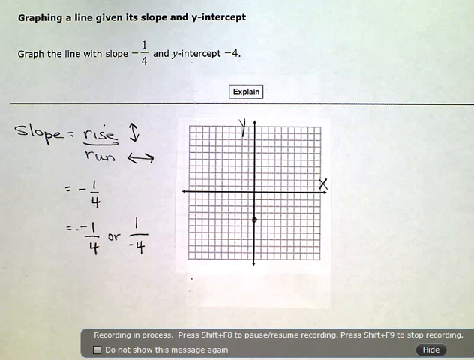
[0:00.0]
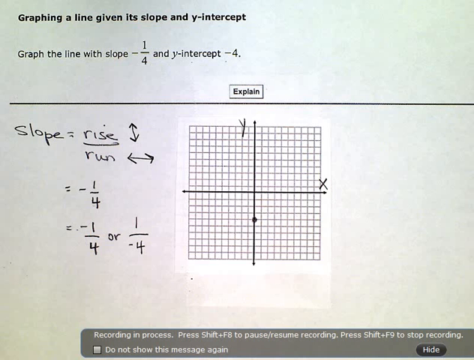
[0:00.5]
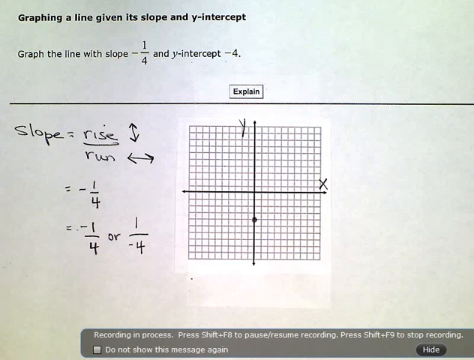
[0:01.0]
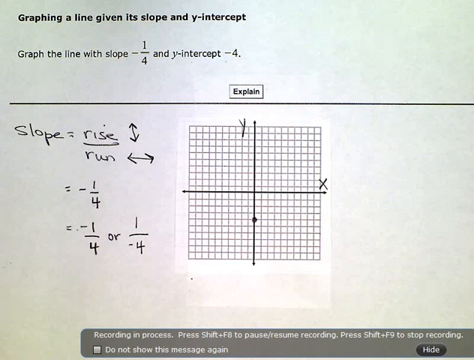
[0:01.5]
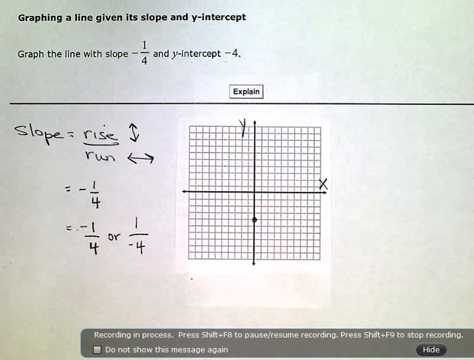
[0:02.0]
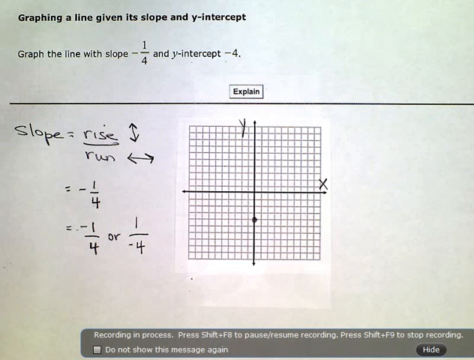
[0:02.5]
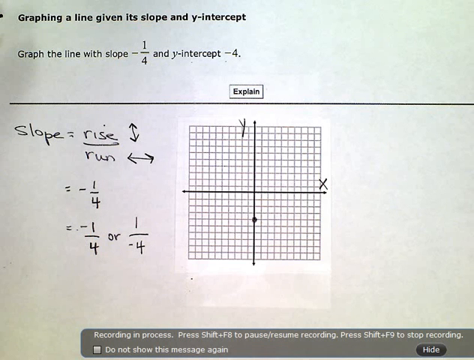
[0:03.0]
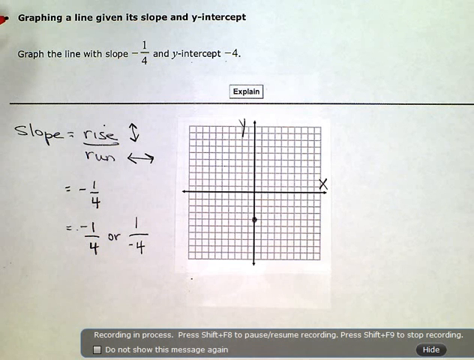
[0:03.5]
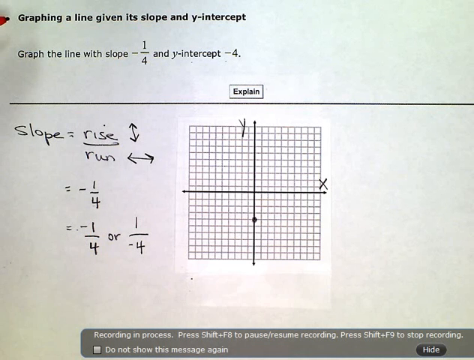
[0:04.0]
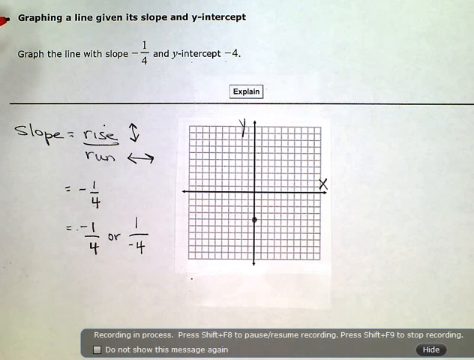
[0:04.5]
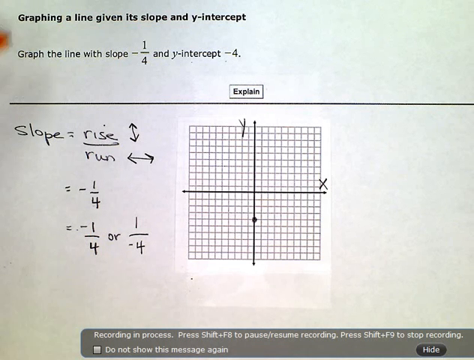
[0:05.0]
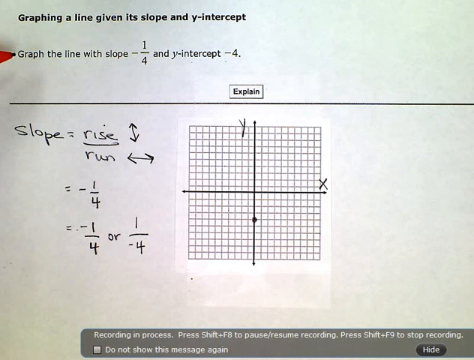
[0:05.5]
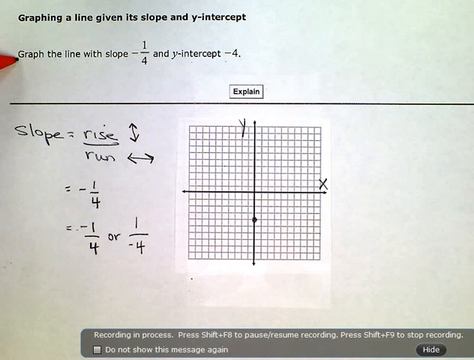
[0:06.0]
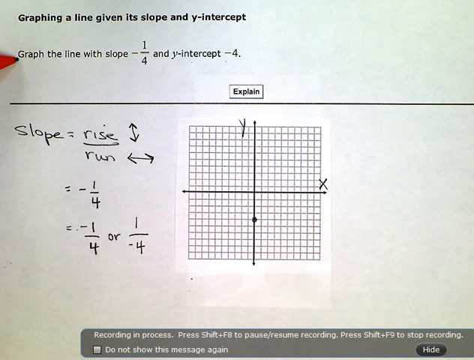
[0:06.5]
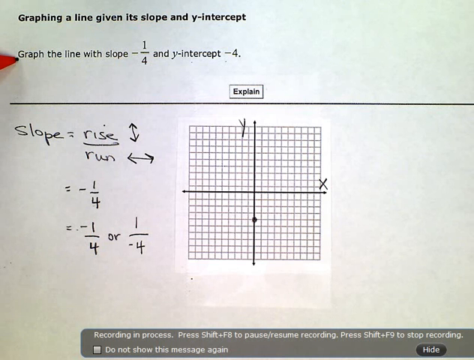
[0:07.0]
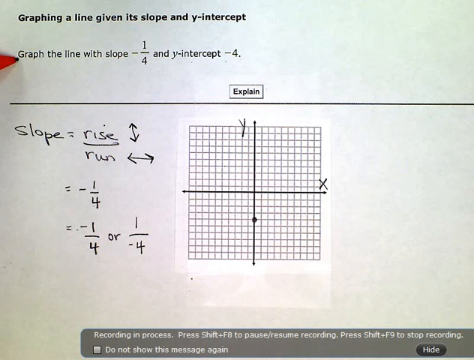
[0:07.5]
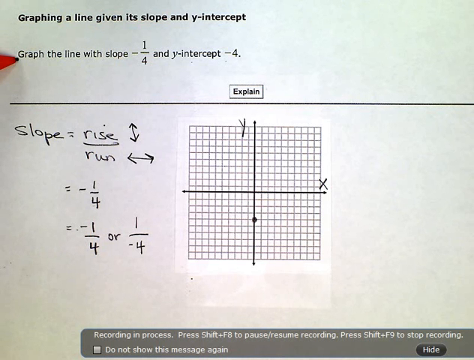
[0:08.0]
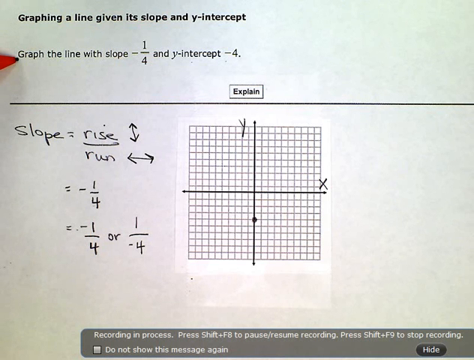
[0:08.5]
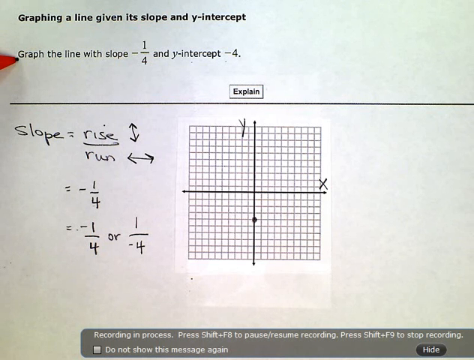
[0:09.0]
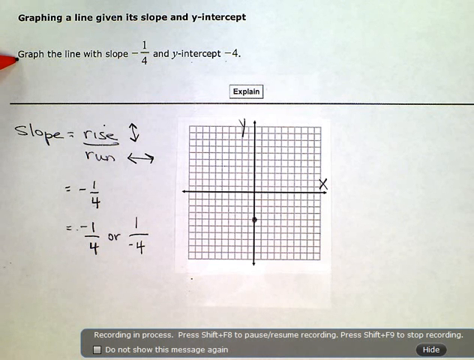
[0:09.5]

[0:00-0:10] What looks like an educational math display covers graphing a line given its slope and y-intercept. In the top left of the screen, someone points with what looks like a pen or marker, apparently going over the question. Below, the slope and the y-intercept are shown, along with a formula that seems to be the solution, and someone appears to be explaining the solution to the problem. At the bottom of the screen there is what looks like a recording error symbol. The person moves down the piece of paper, showing fractions and going over them, but stays more toward the top of the page.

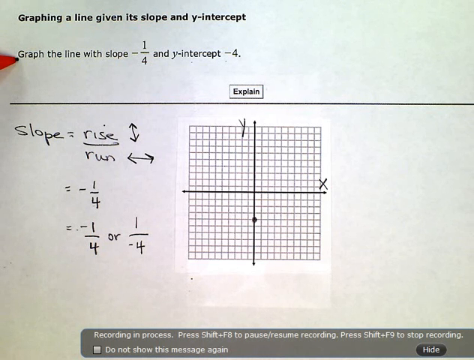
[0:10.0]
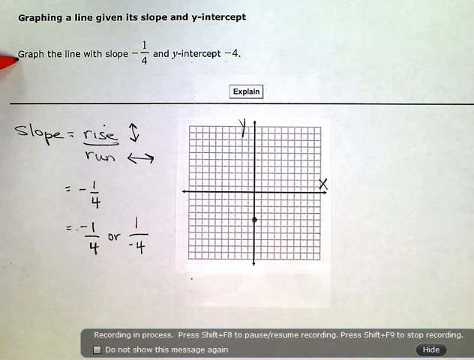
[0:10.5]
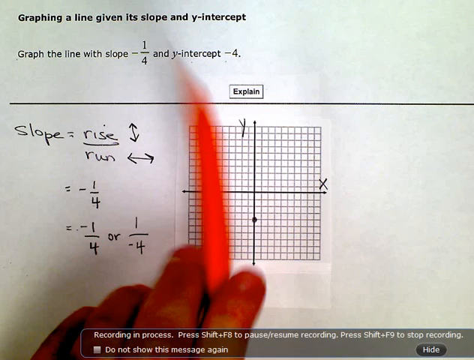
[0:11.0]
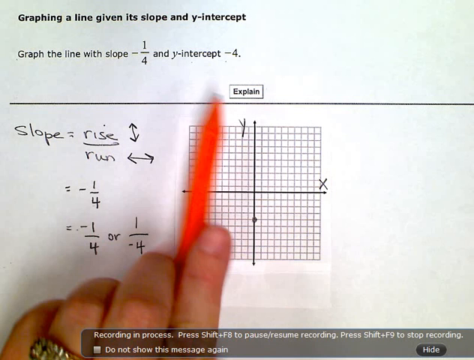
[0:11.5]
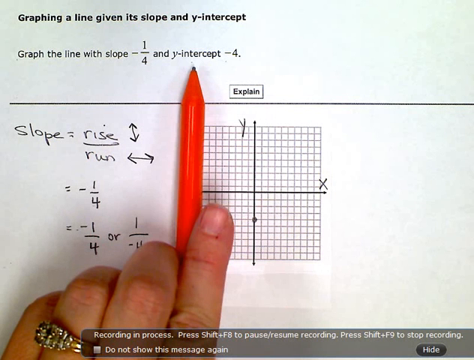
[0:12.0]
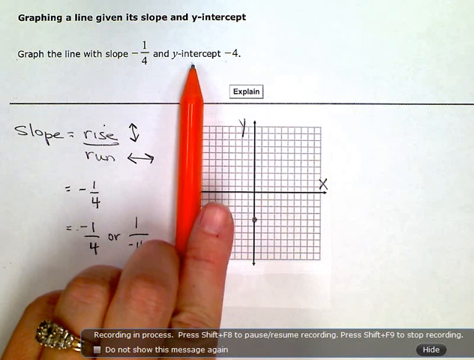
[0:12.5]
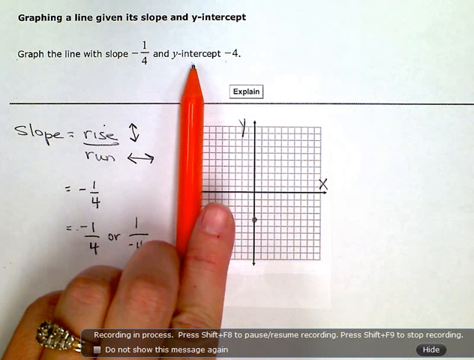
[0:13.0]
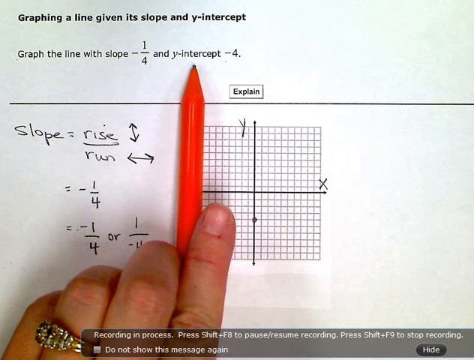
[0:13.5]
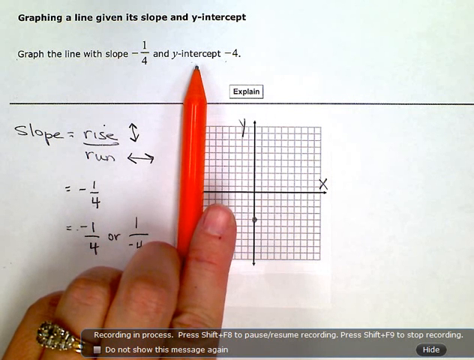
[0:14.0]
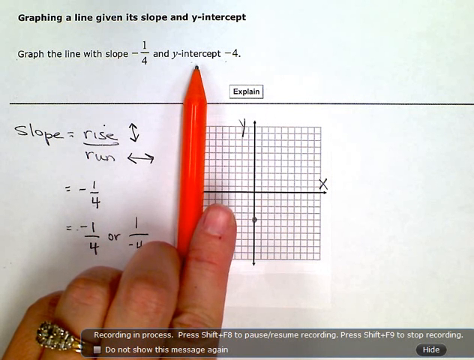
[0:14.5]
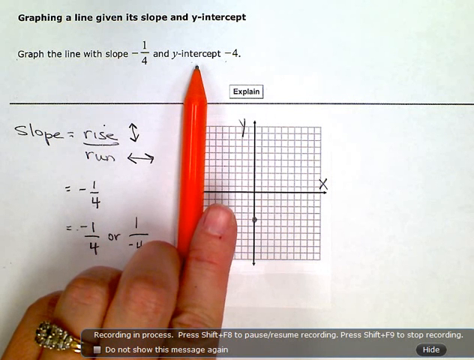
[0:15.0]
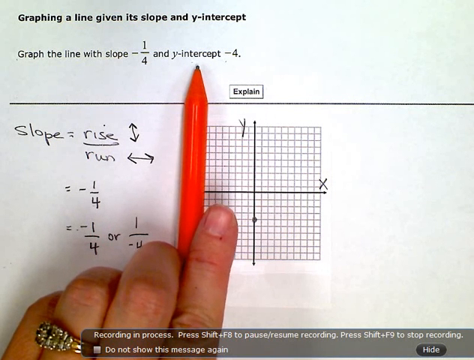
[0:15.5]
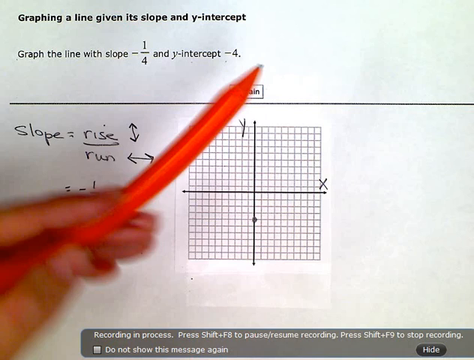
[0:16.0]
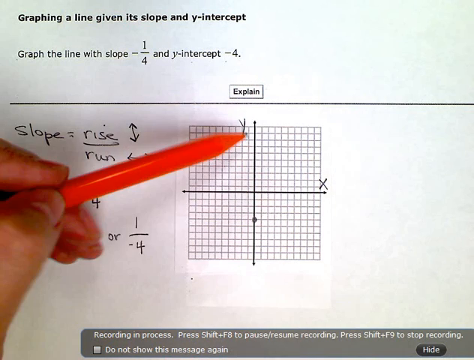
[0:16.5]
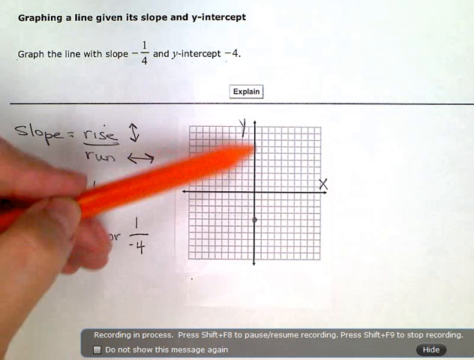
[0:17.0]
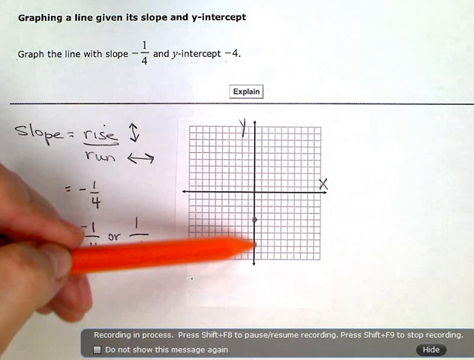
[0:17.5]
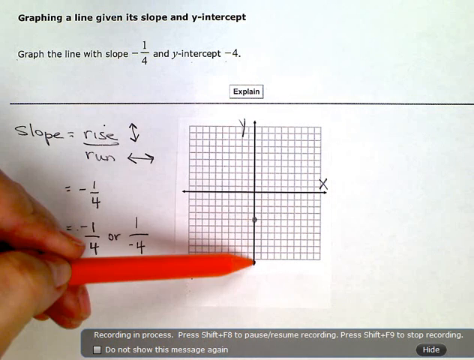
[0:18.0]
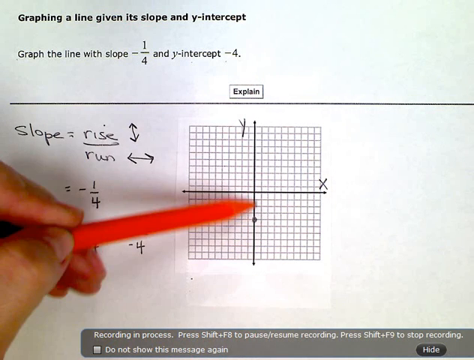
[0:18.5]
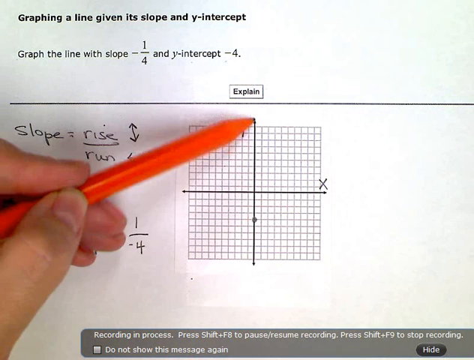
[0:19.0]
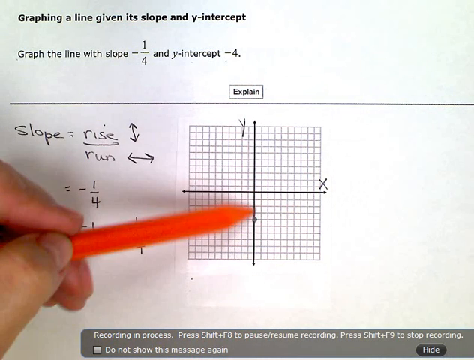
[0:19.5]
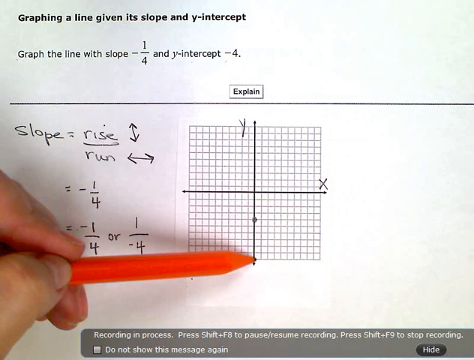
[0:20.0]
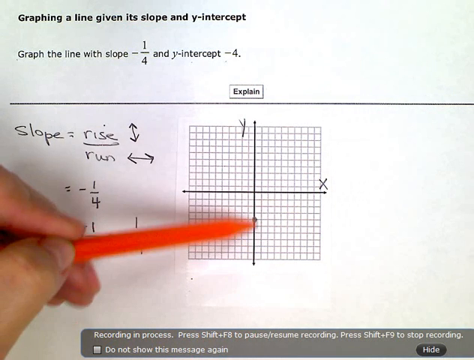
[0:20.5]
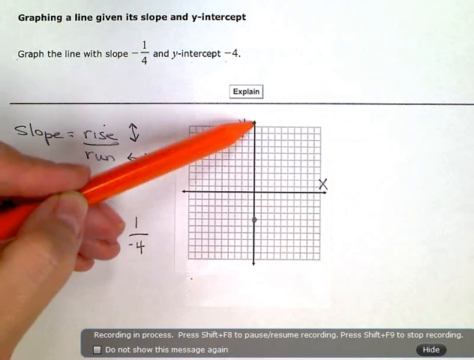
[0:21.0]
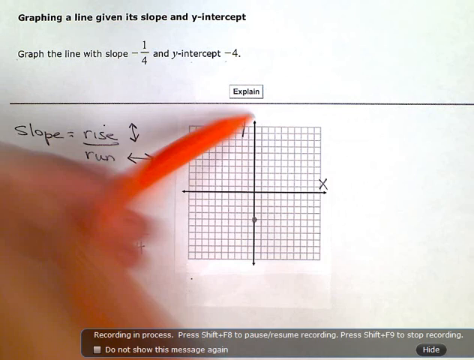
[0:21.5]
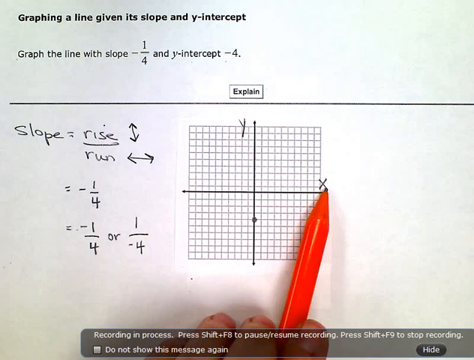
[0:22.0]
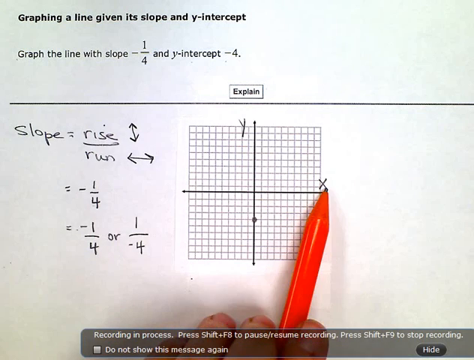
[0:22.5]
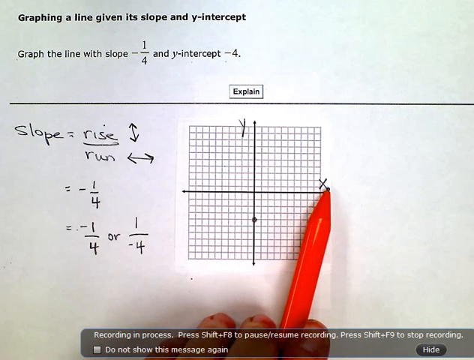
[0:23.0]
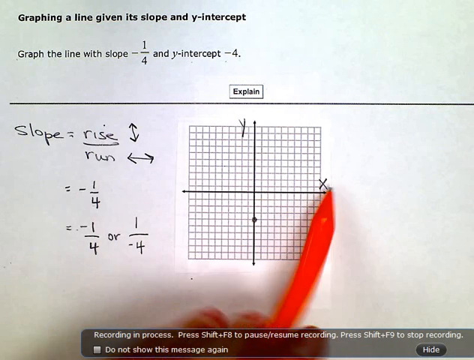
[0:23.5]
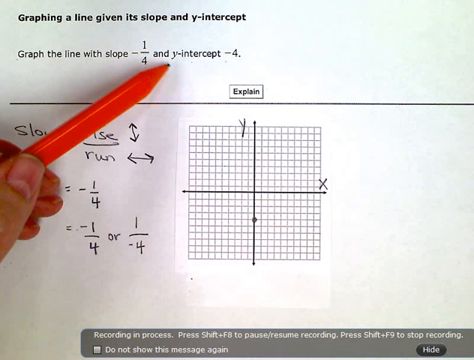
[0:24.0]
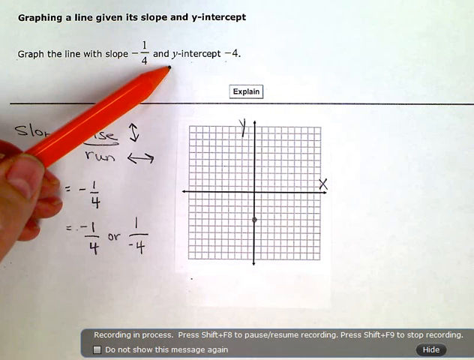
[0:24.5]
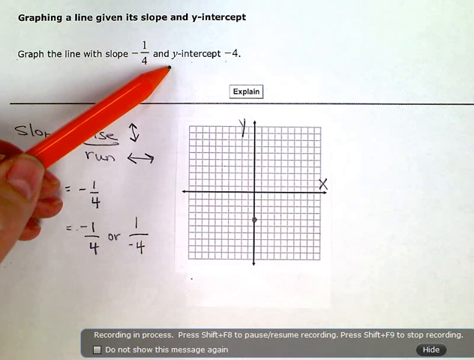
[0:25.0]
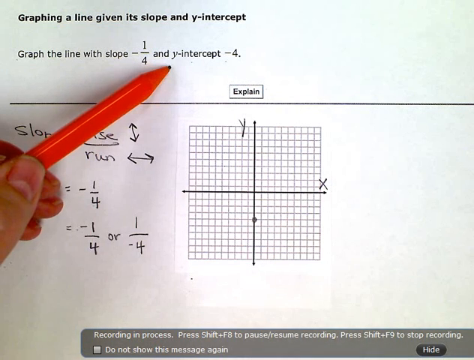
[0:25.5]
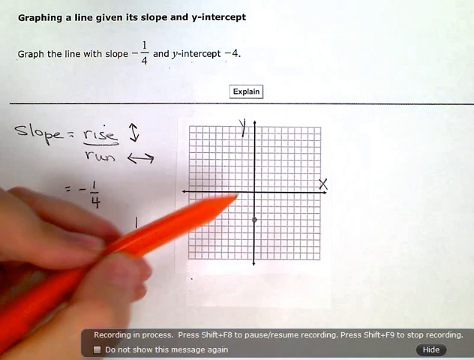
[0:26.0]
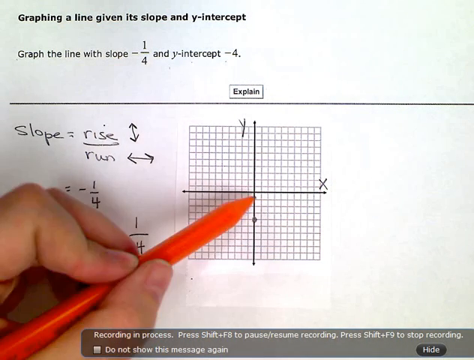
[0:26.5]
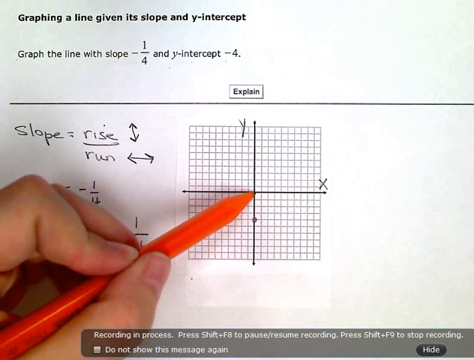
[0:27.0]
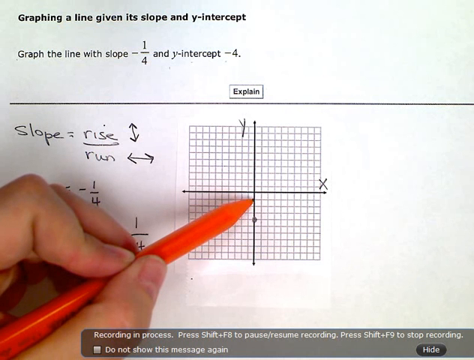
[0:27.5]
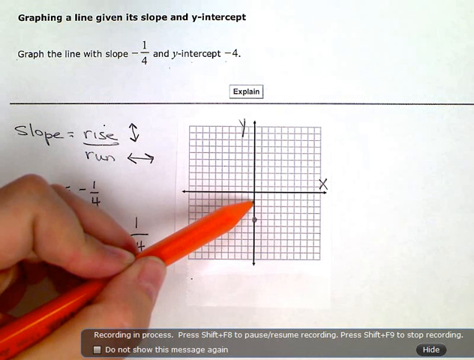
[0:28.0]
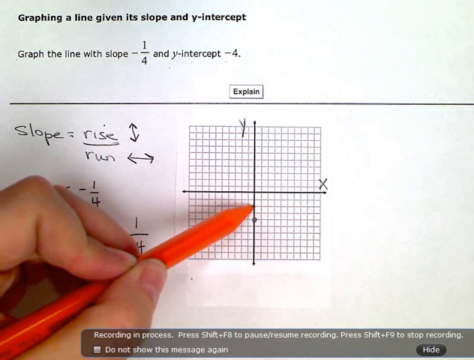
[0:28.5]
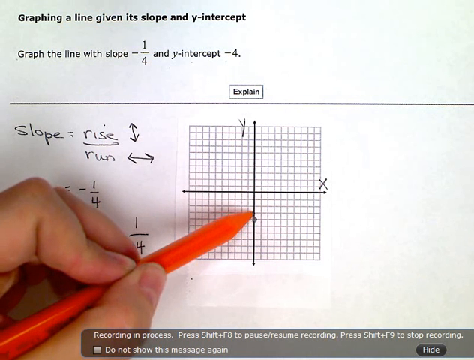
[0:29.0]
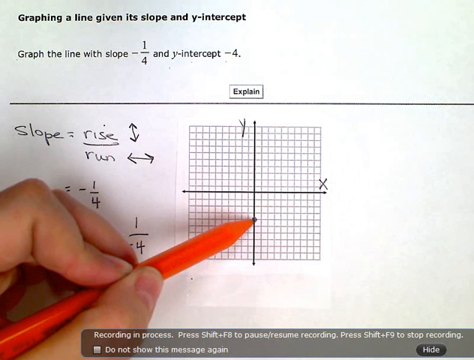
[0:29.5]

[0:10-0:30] The instructor points to the top, where the word "Y intercept" appears, apparently explaining the y-intercept. They move down to the grid, point to where it shows Y, and go up the y-axis. Then they show the horizontal x-axis. Next they point to the fraction 1/4 at the top, apparently translating the slope 1/4, or at least pointing to where it would go on the graph. At one point they point to a dot on the graph. Then they move to the right side, where there is an X.